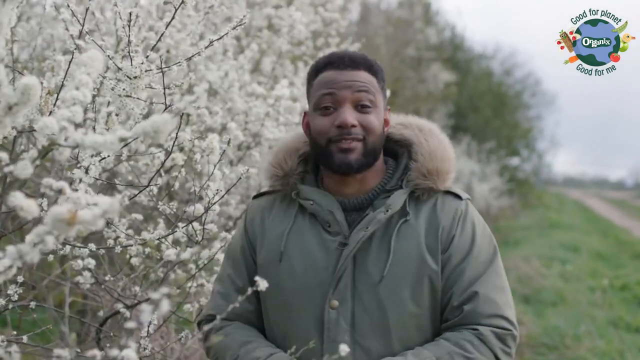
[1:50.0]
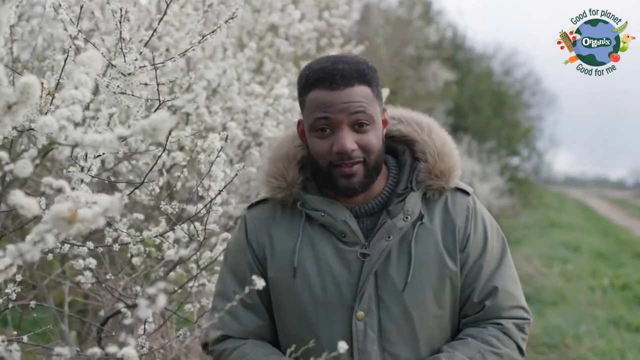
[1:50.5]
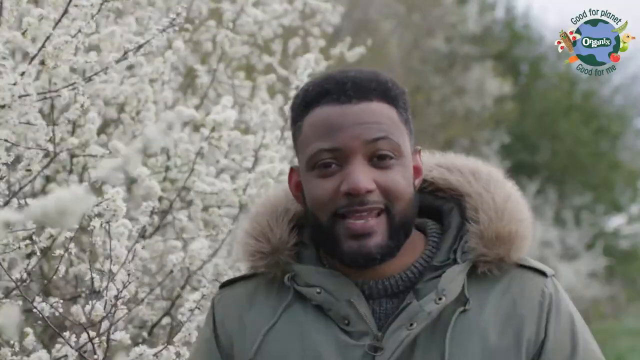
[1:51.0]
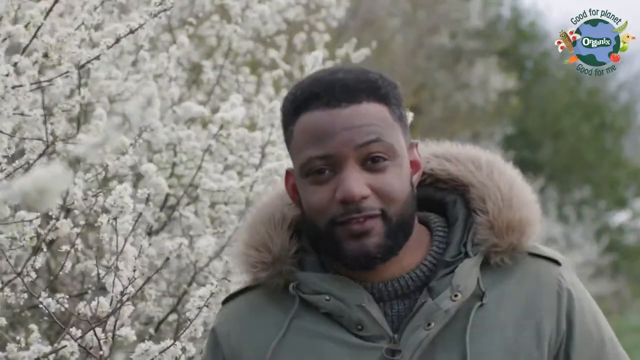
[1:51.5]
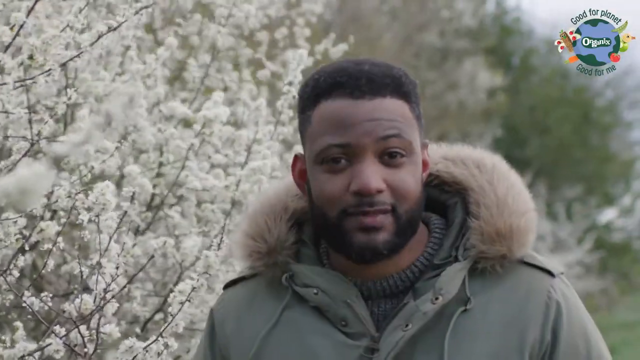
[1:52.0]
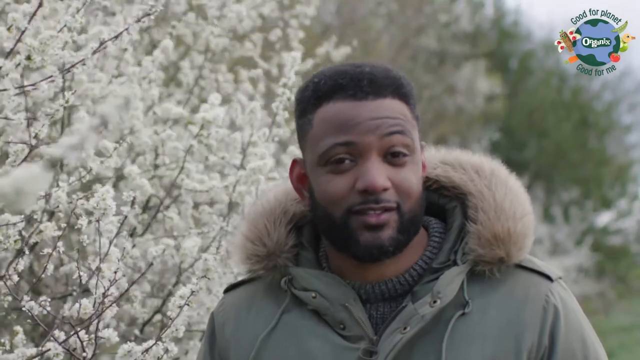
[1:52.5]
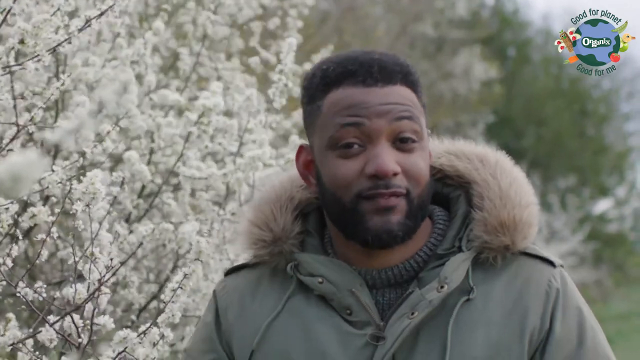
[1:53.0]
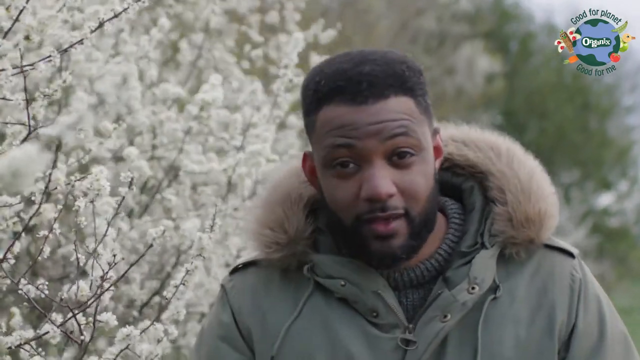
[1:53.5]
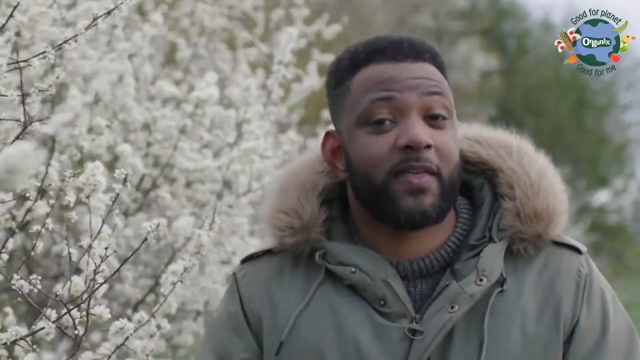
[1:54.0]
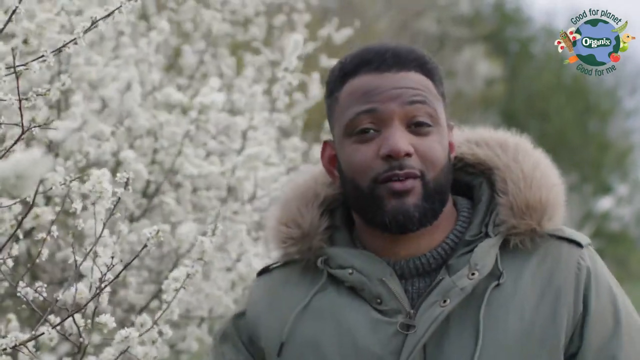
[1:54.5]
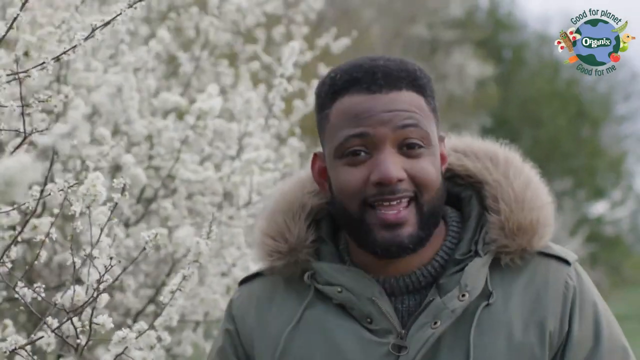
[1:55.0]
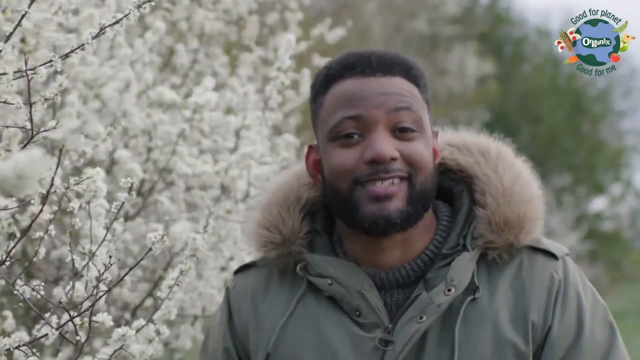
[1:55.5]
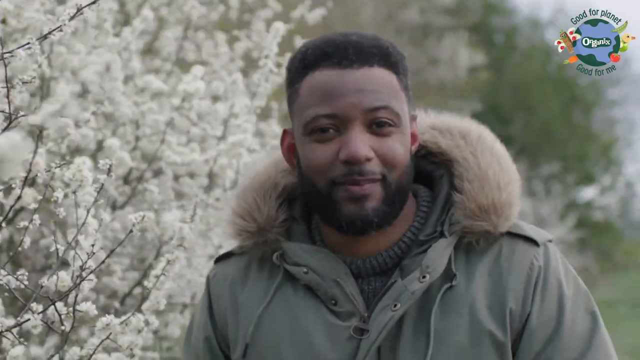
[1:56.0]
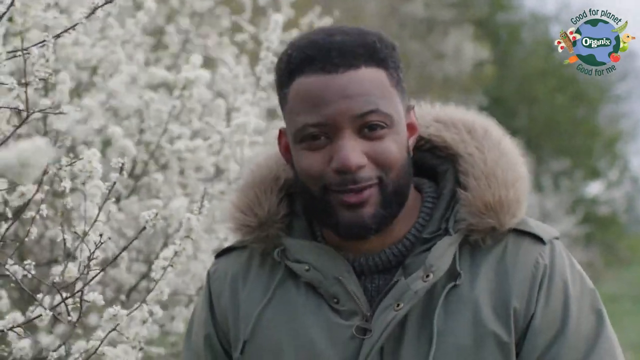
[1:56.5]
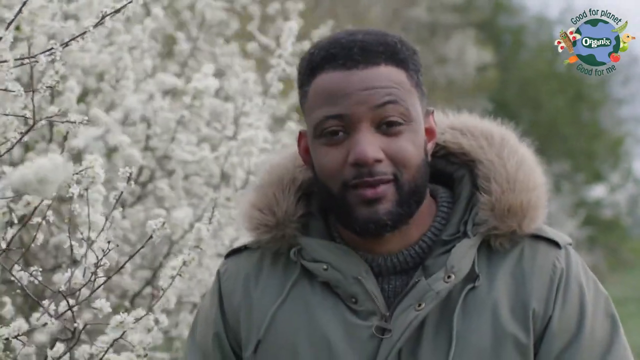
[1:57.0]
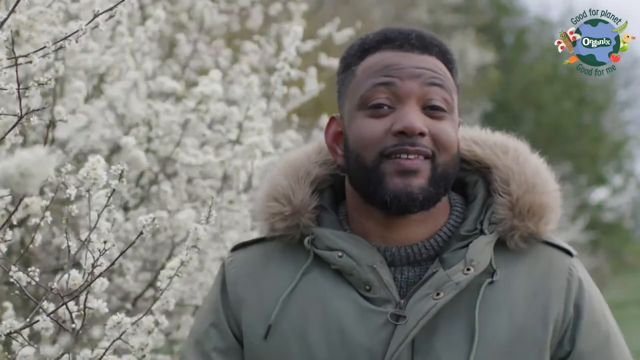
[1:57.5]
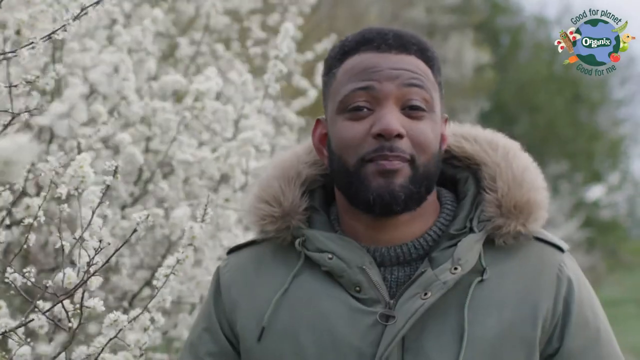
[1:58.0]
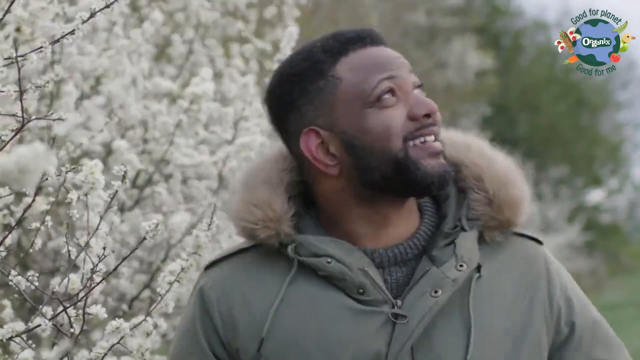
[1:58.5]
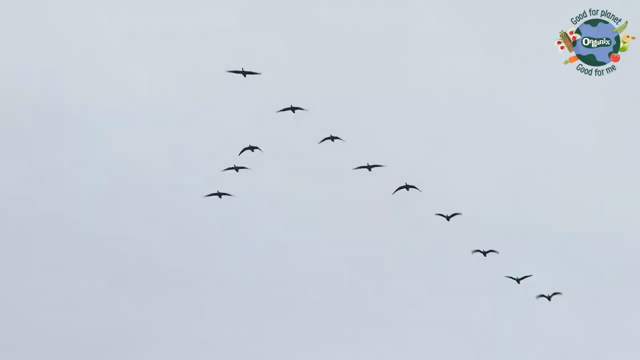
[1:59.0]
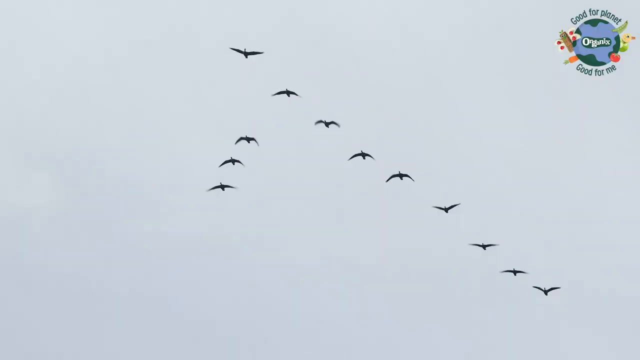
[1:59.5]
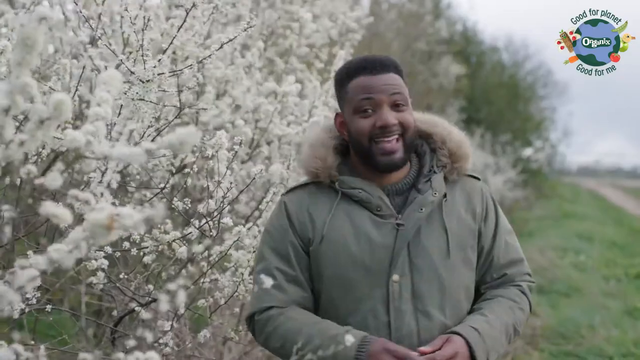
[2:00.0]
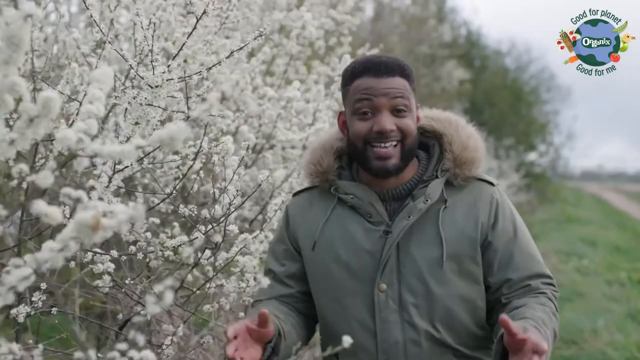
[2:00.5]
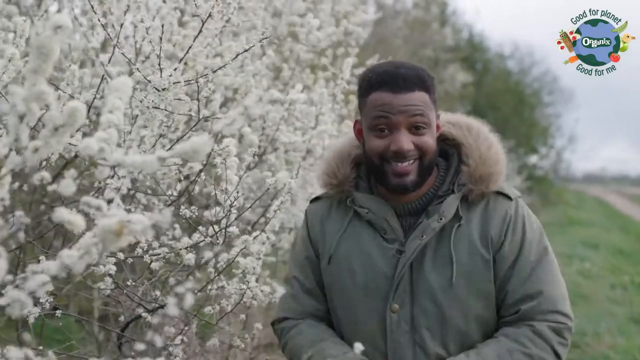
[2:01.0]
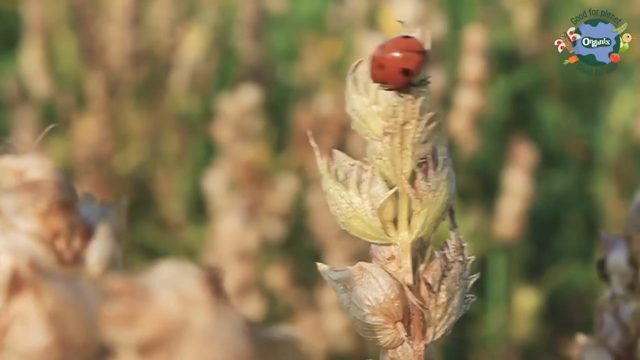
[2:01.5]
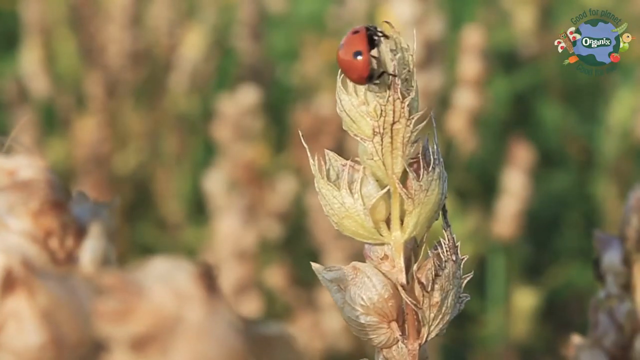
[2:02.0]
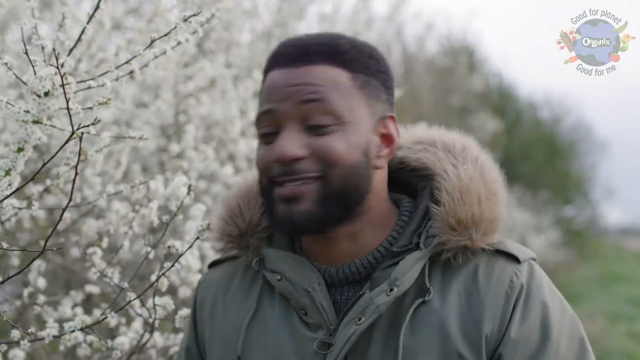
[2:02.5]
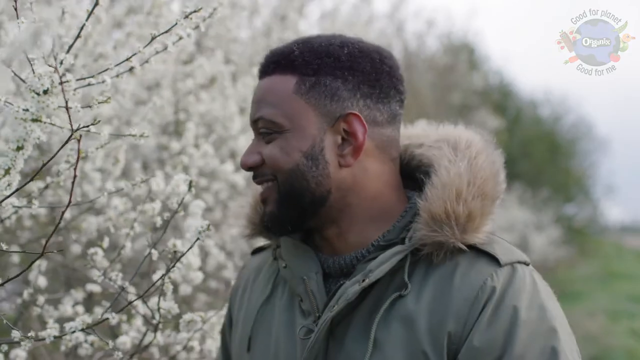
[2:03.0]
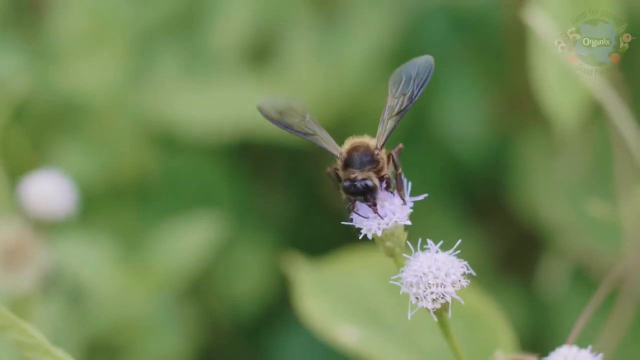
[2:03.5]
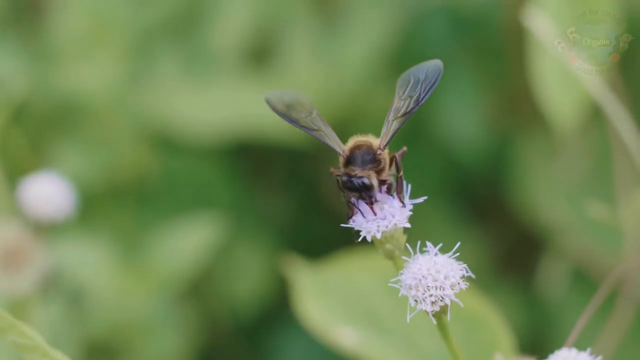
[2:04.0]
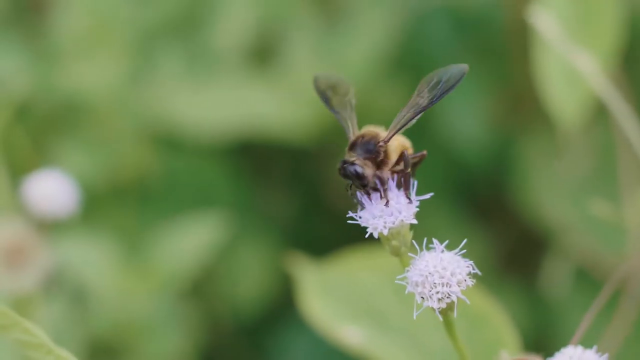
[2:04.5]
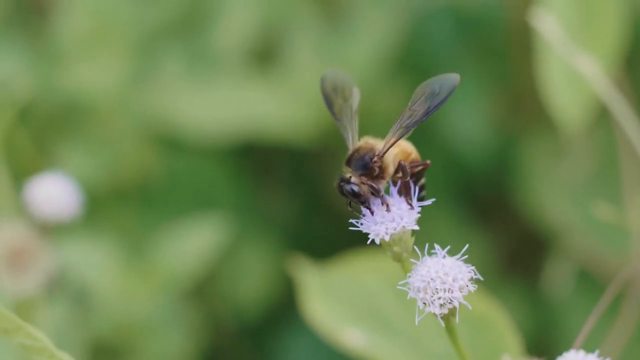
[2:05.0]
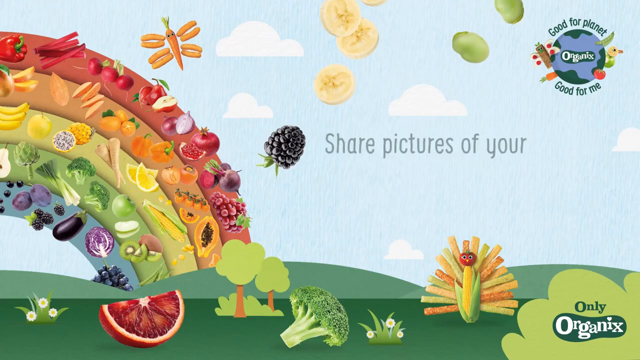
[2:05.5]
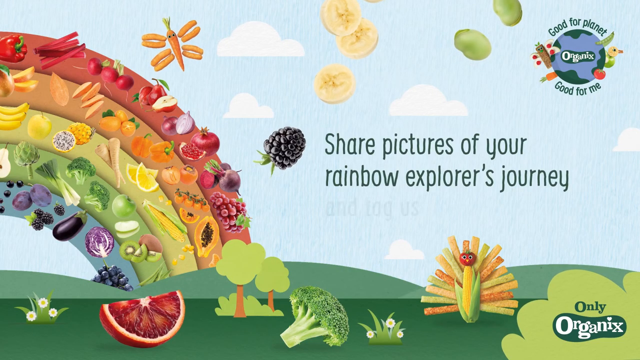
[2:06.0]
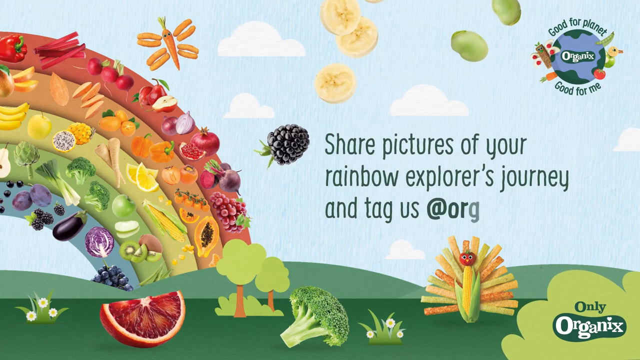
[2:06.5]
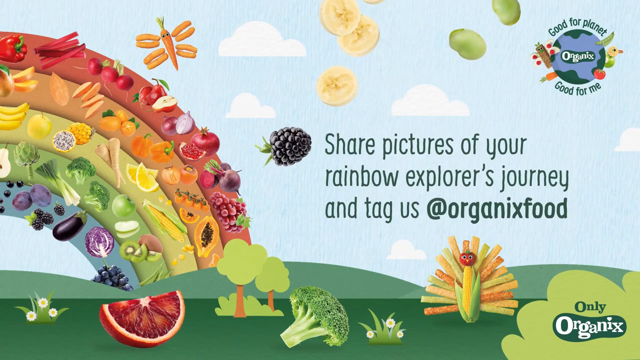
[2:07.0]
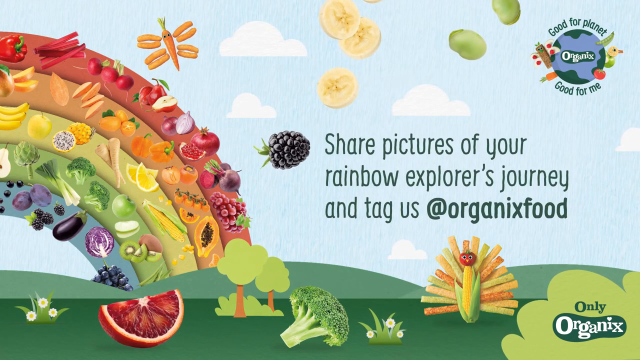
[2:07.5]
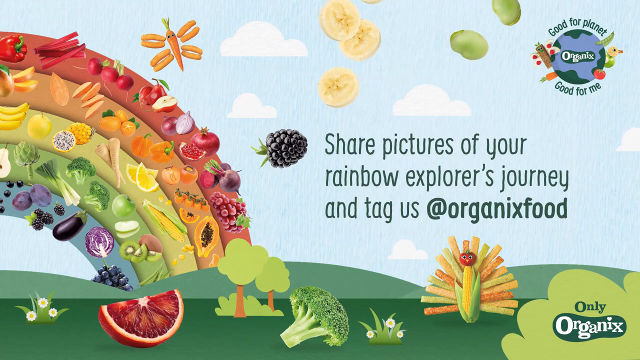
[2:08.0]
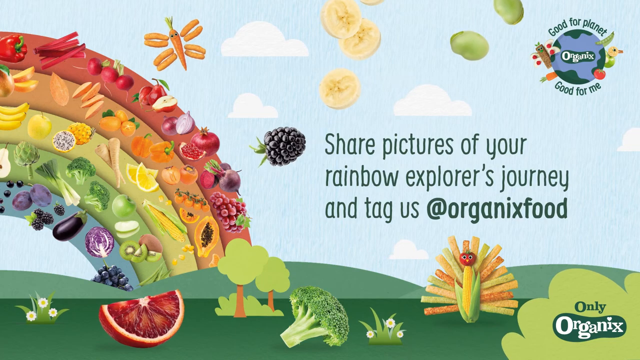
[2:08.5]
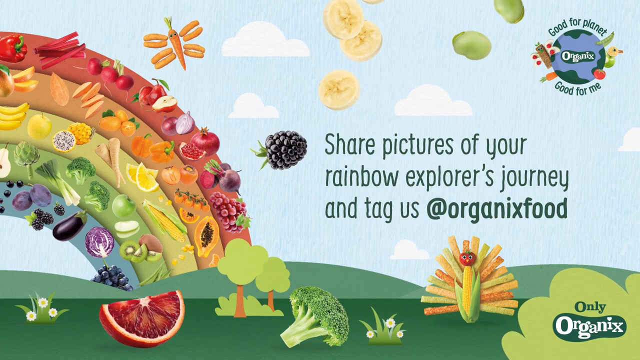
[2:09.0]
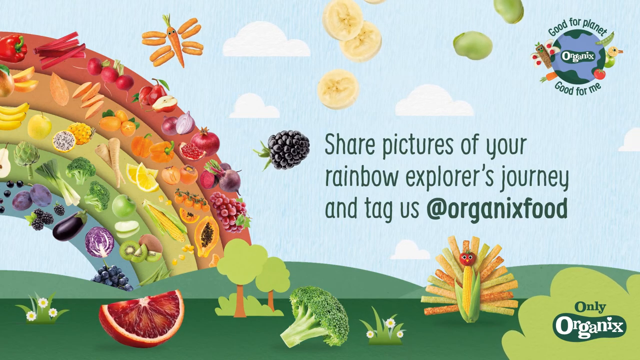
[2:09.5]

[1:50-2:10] A very colourful setting has a banner in the top left reading "good for the planet good for me" and a picture of the earth with the word "organics" in the middle; the rest is a blue sky theme with a lot of fruit that appears to be in the shape of a rainbow, under the heading "on the farm with JB". A man rides a tractor and speaks directly to the camera, appearing to show farming methods, what they plant and how fresh it is growing. He then shows how they plant. JB seems very proud. No animals or females are visible. At the end, JB walks through the farm.